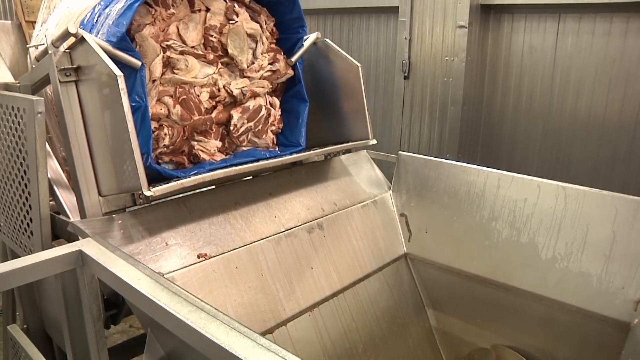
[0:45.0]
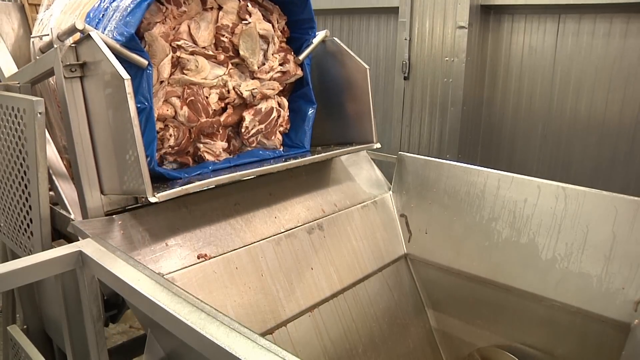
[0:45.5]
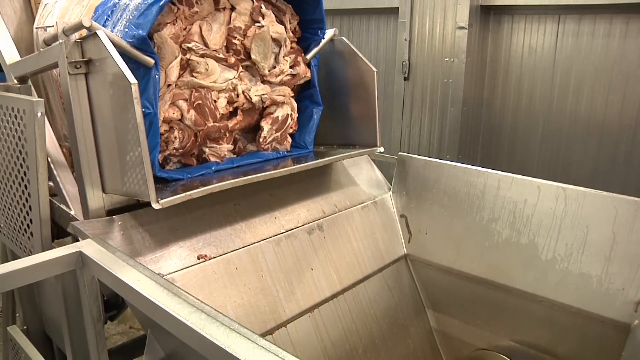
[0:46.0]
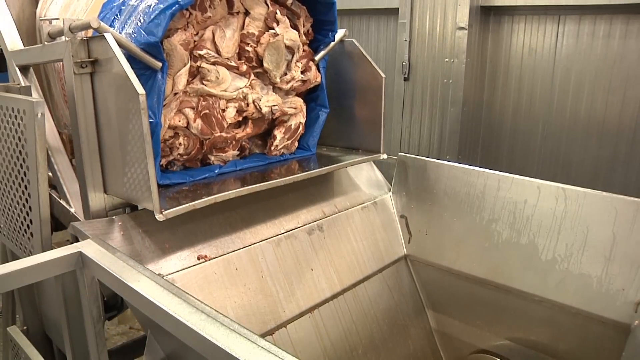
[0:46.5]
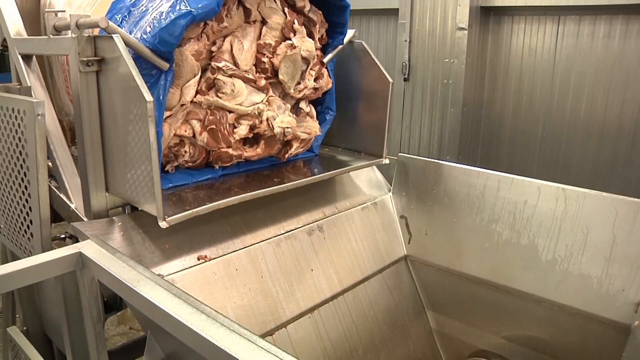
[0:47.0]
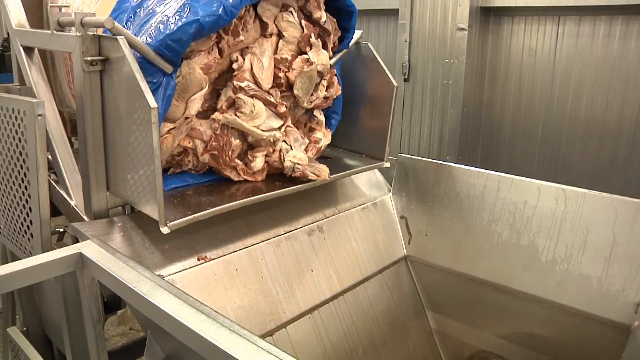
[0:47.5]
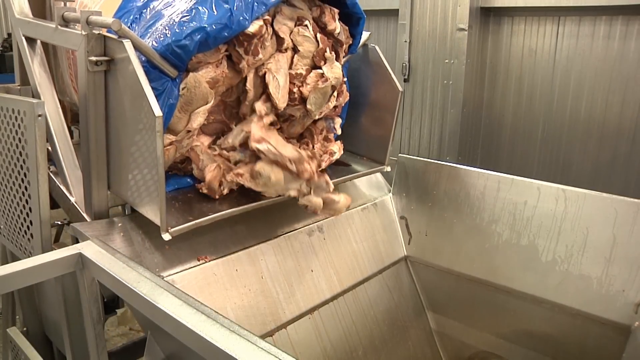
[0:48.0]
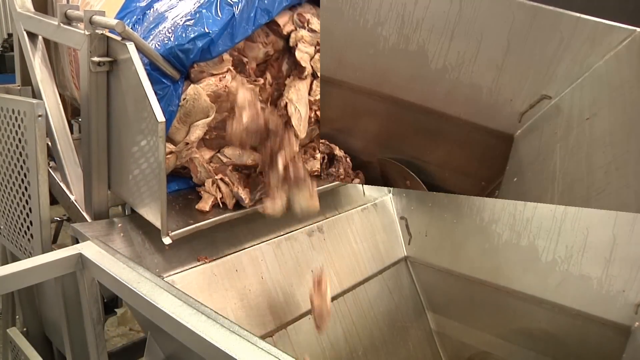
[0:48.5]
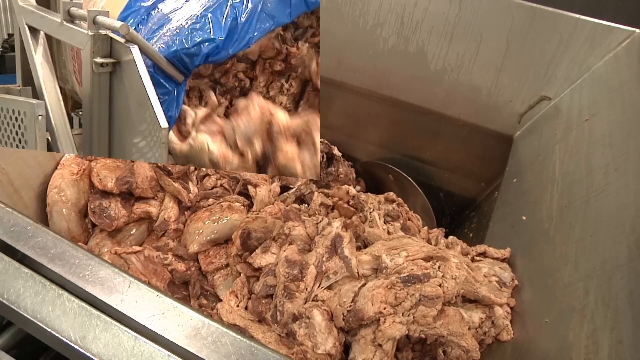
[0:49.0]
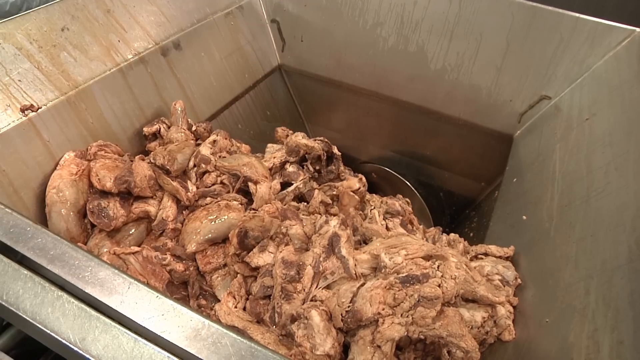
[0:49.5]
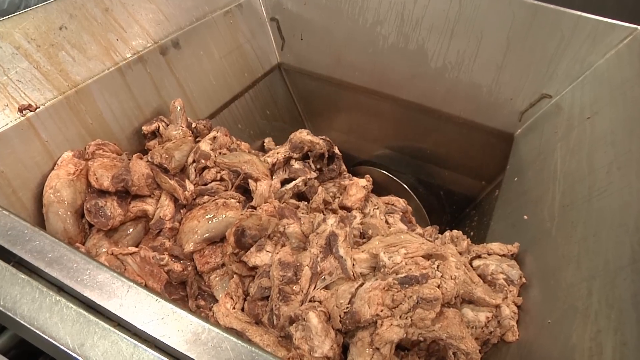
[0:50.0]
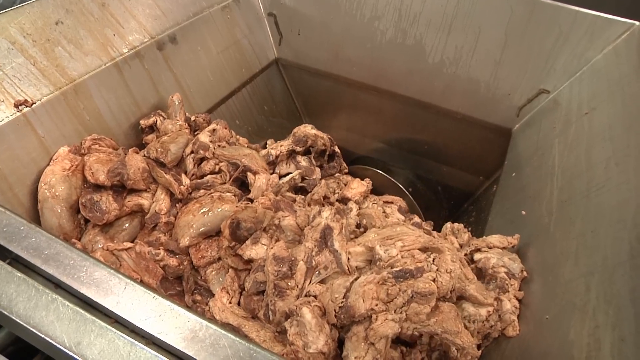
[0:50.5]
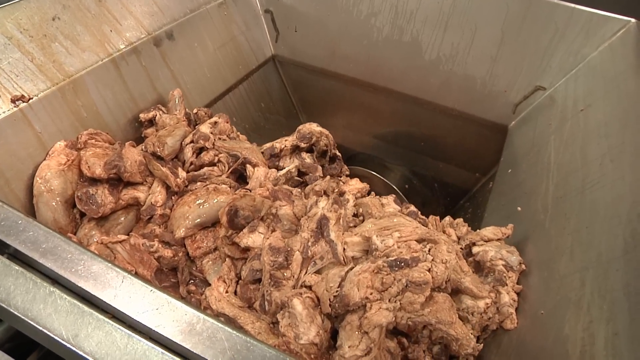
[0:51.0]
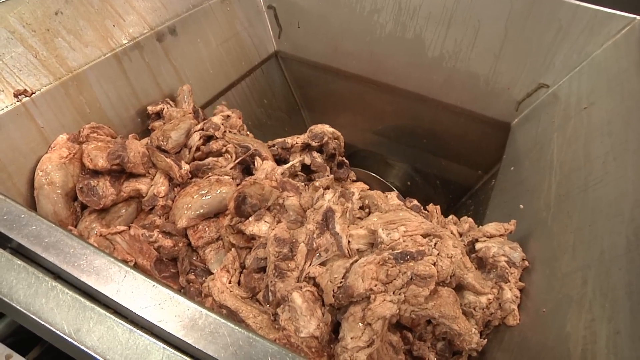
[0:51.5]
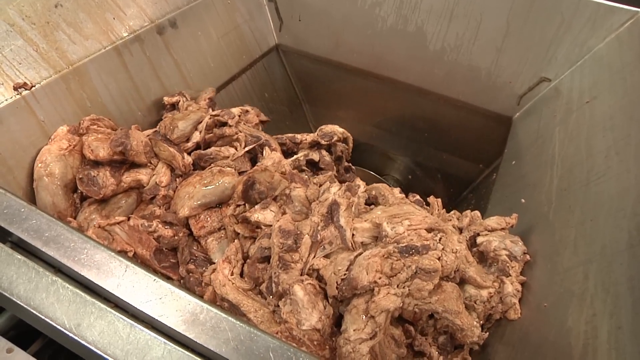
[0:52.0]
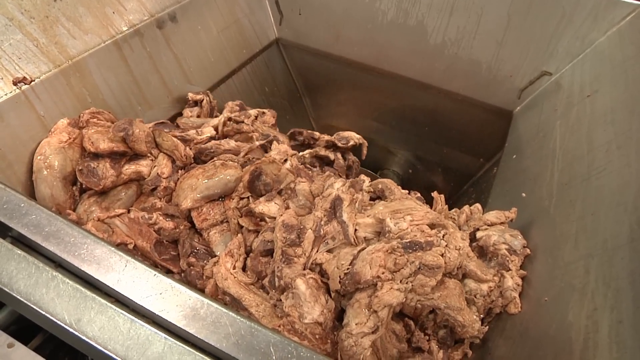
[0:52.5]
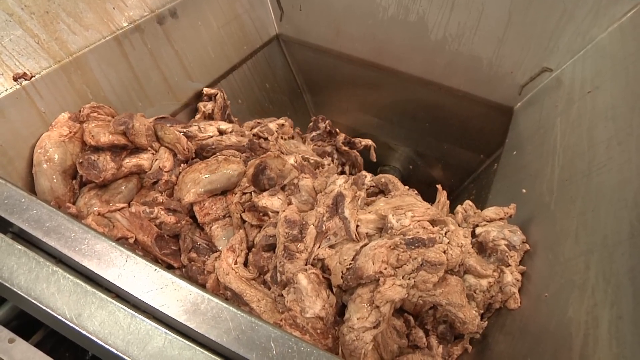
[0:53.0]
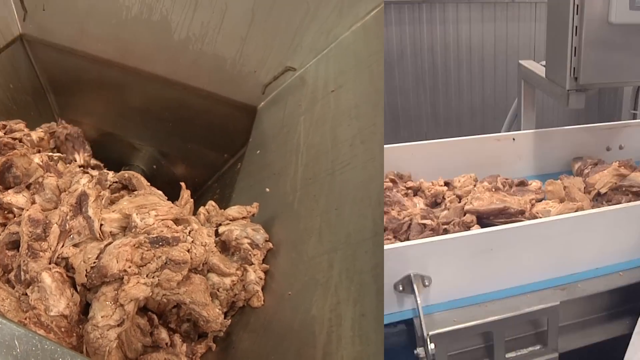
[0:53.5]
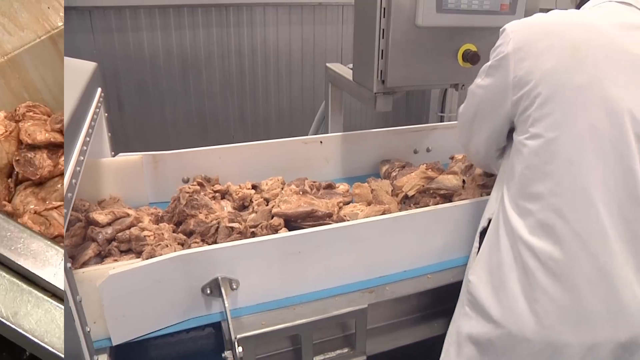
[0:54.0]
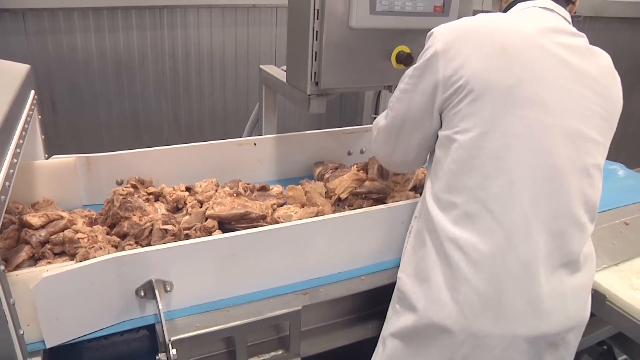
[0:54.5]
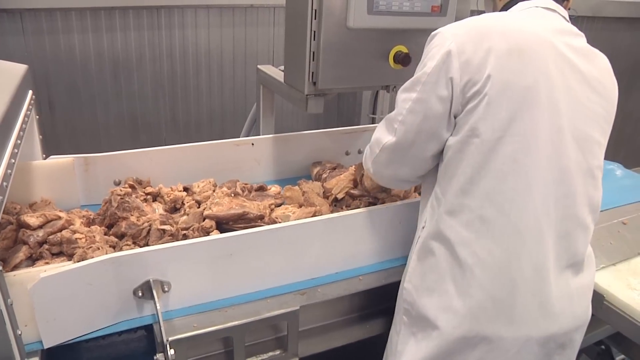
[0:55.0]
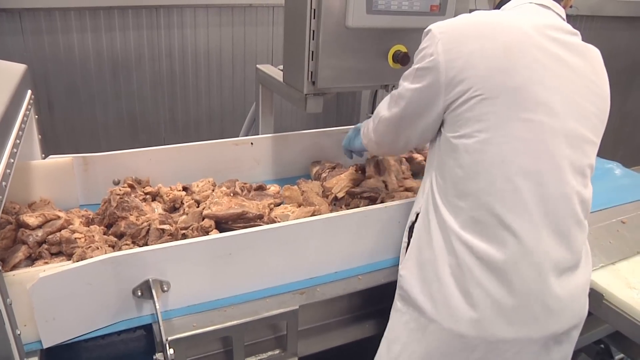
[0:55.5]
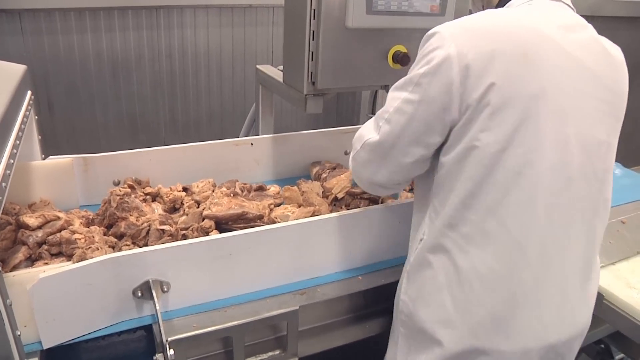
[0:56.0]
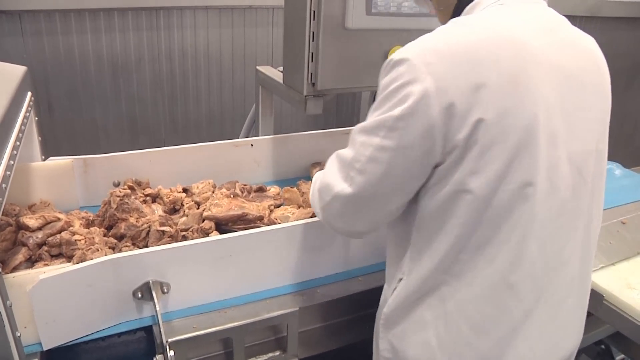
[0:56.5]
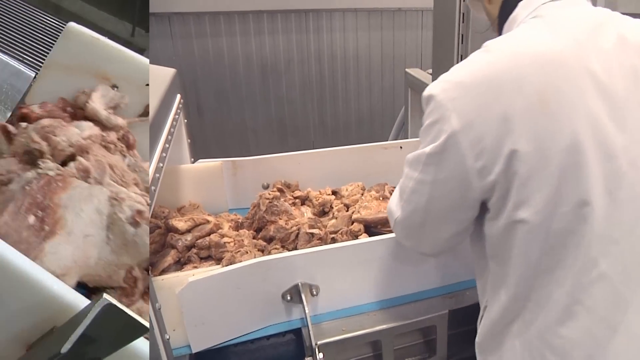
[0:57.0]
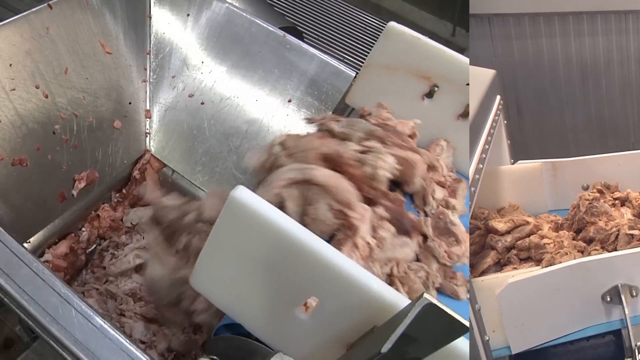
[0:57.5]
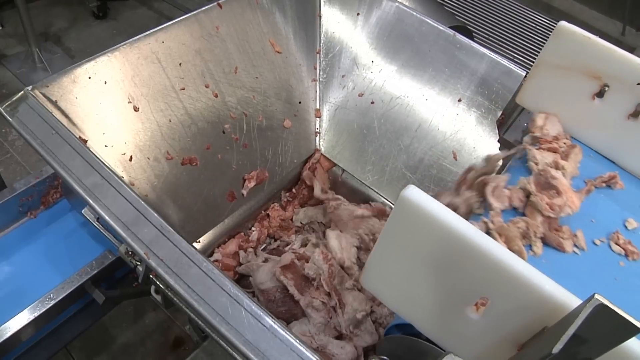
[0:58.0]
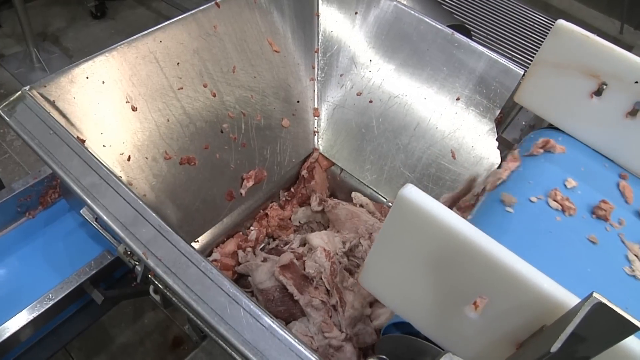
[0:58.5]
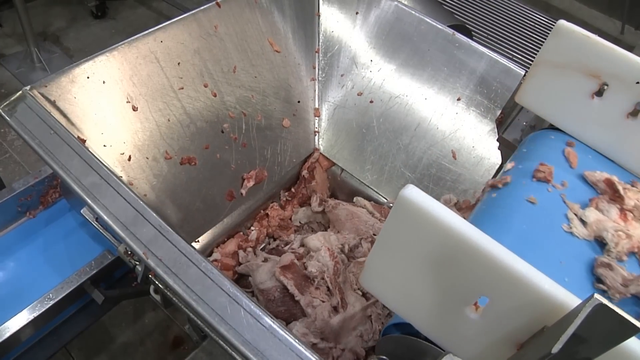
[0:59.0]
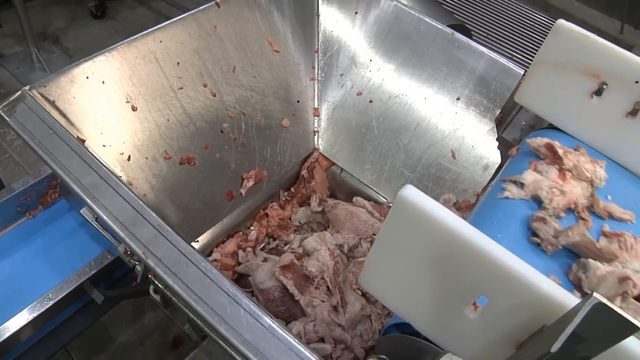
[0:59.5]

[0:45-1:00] Further along in the processing, the cut meat from the barrels appears to be ground, while some meat seems to be taken out and something separated from it, maybe the organs, which appears to be processed into some other food product. The setting looks like a part of the factory floor. People wear lab coats, gloves and other protective gear. There looks to be a lot of meat, and at the end there is what looks like some sort of chicken feet or some part separated from the rest of the cut.